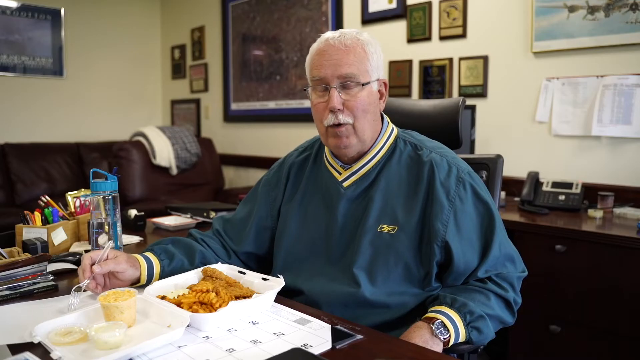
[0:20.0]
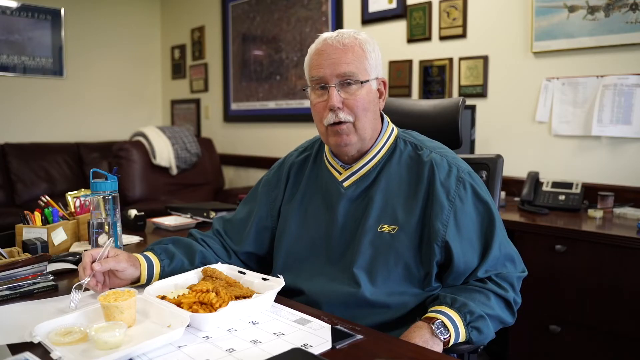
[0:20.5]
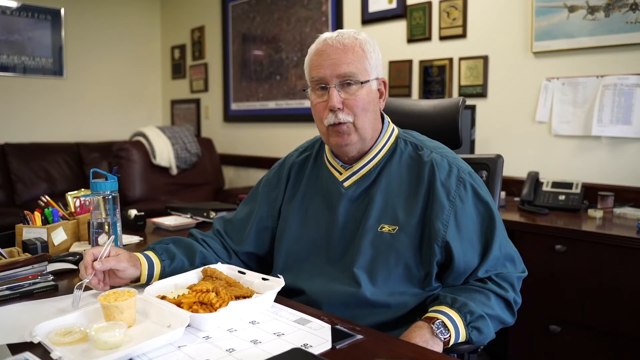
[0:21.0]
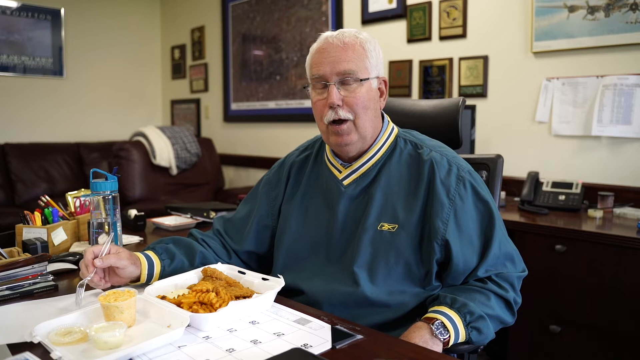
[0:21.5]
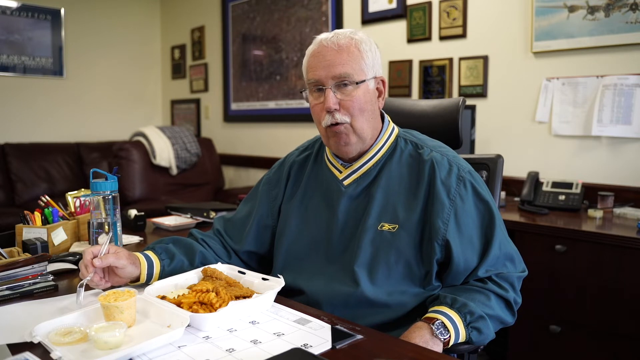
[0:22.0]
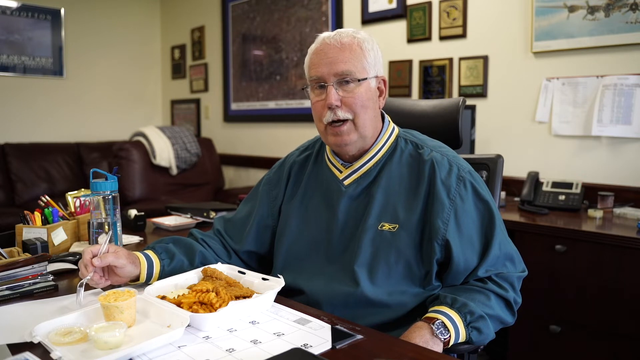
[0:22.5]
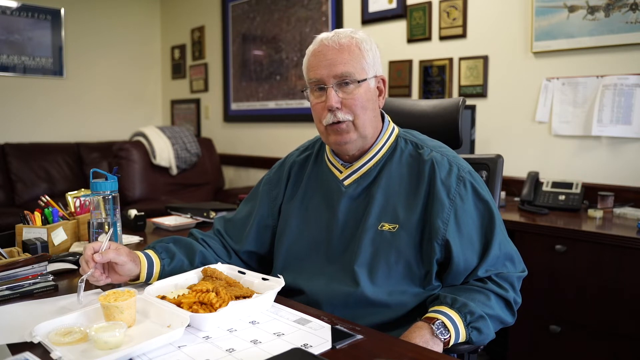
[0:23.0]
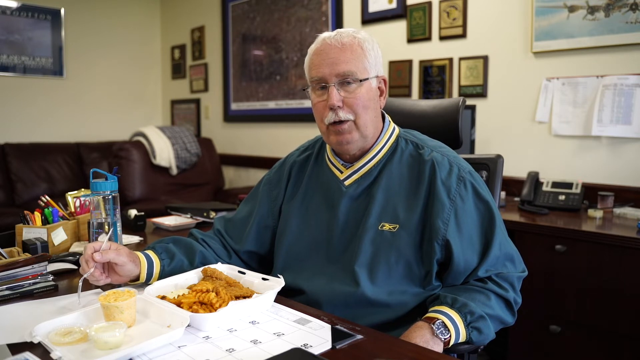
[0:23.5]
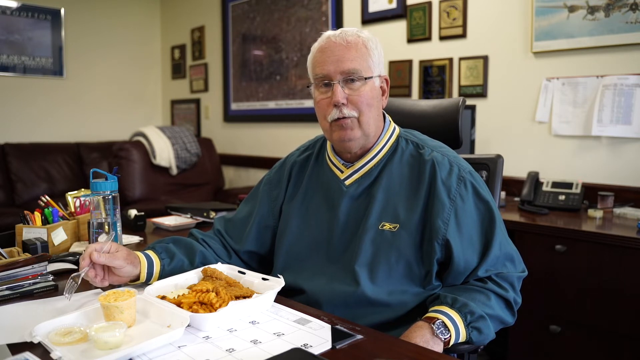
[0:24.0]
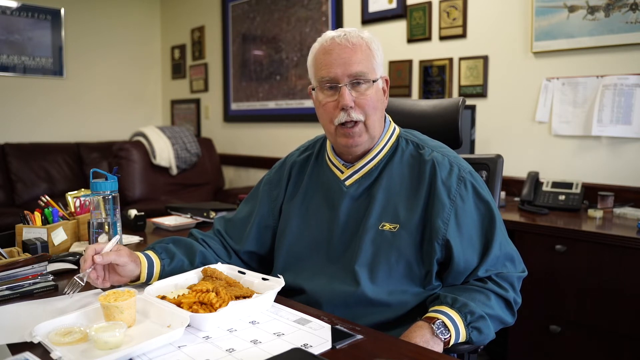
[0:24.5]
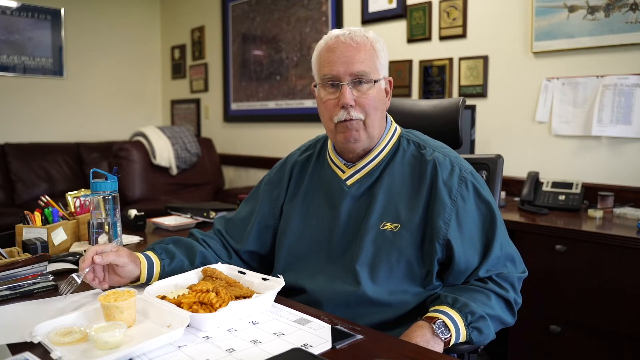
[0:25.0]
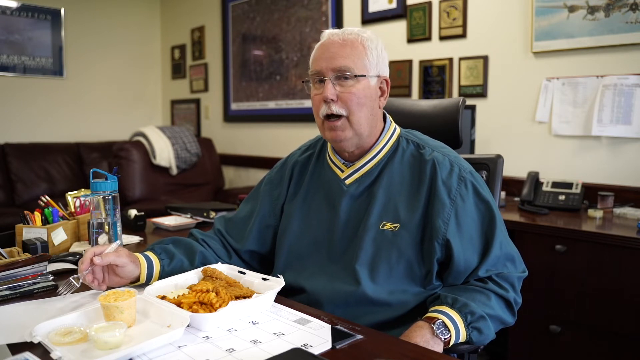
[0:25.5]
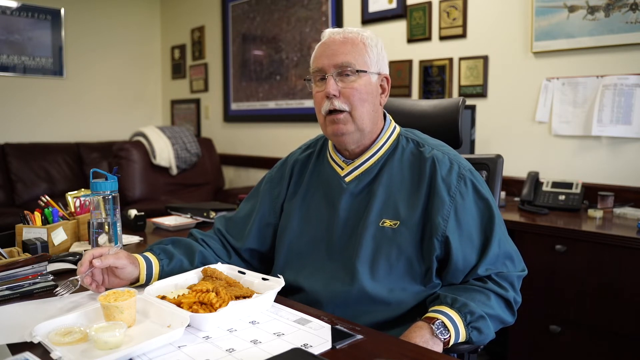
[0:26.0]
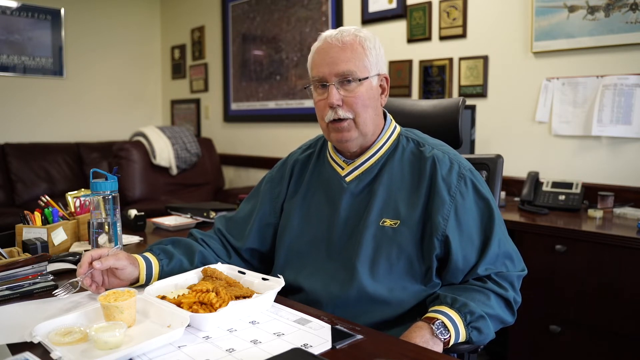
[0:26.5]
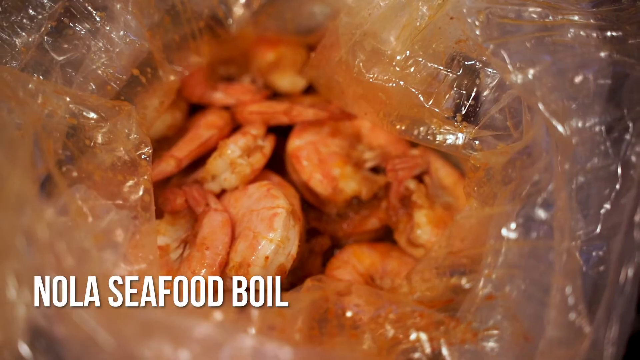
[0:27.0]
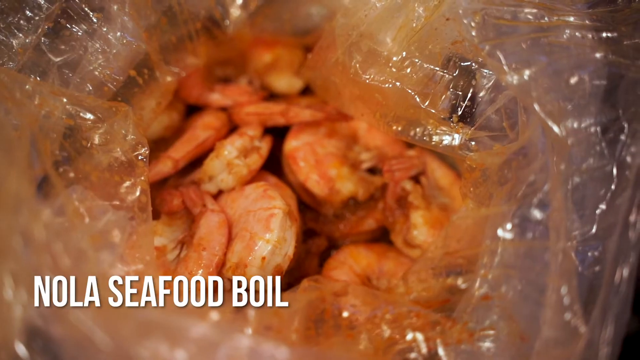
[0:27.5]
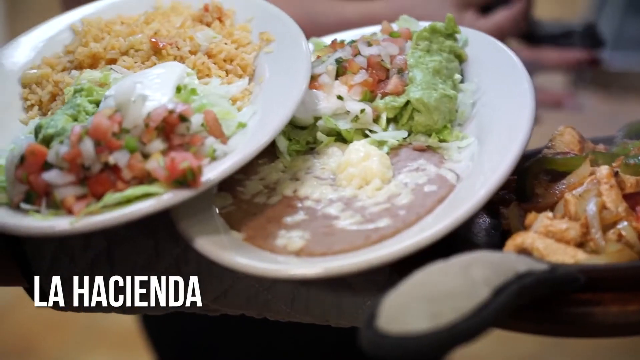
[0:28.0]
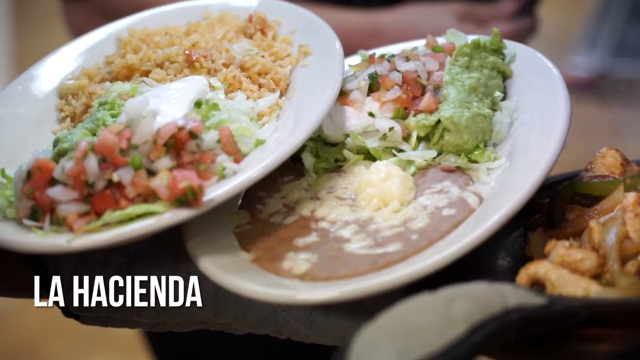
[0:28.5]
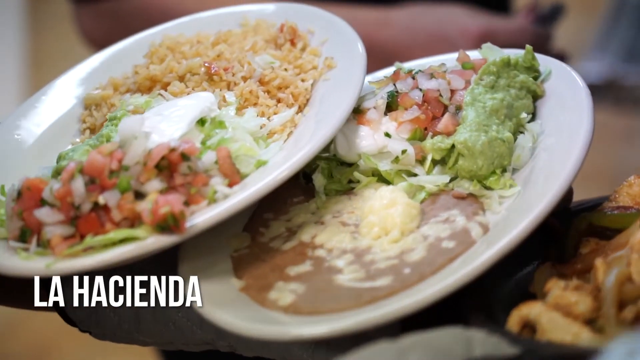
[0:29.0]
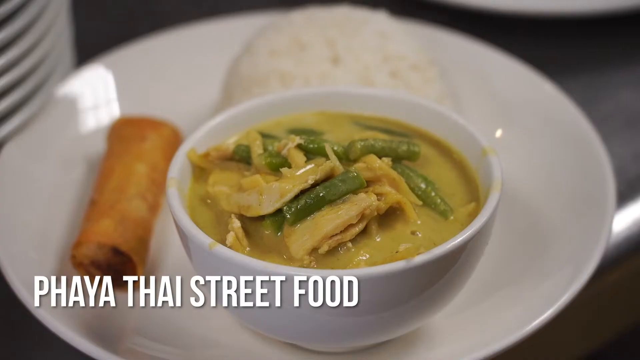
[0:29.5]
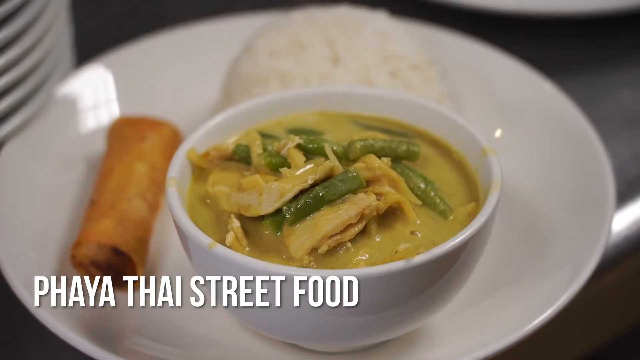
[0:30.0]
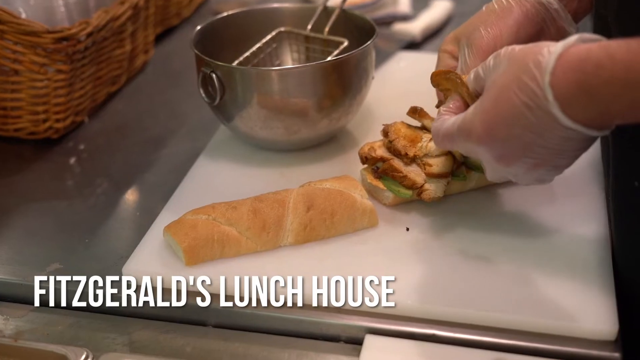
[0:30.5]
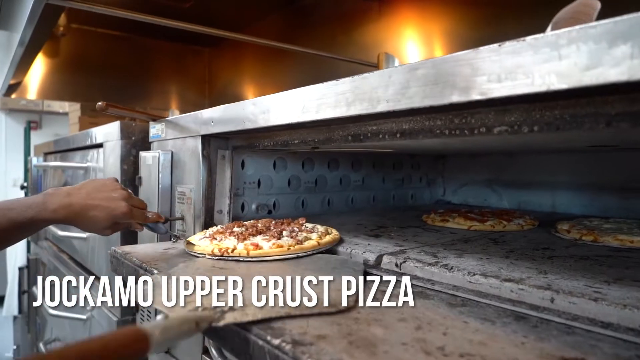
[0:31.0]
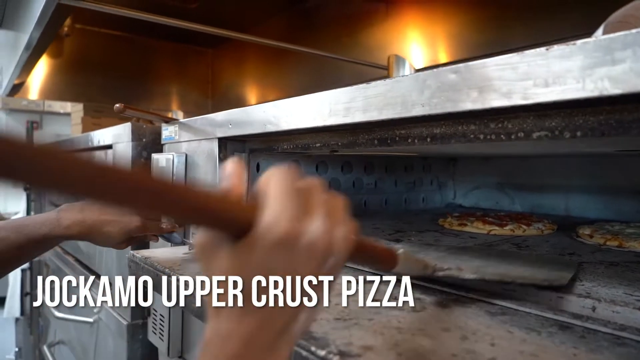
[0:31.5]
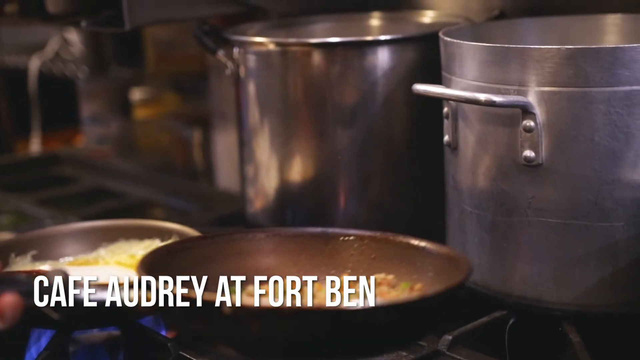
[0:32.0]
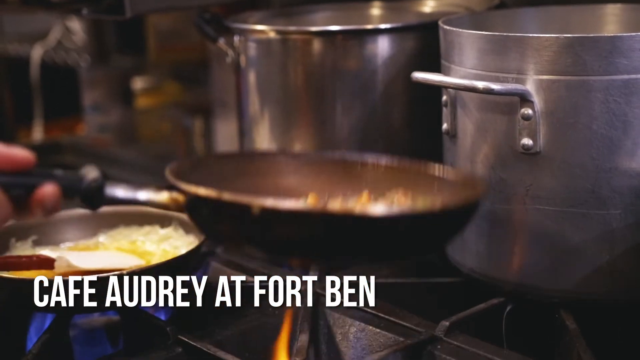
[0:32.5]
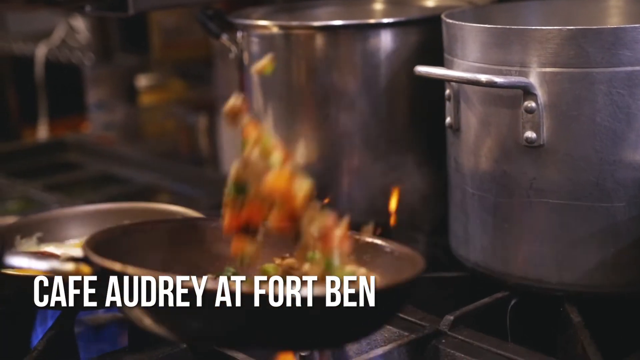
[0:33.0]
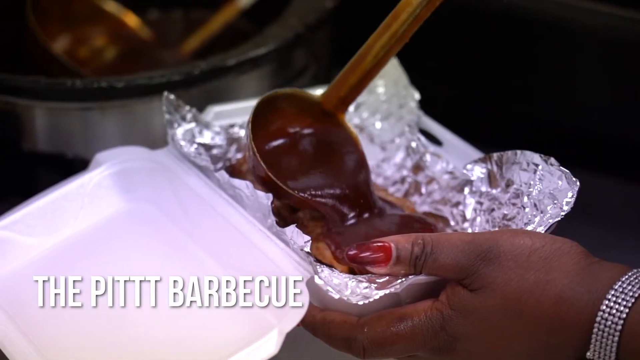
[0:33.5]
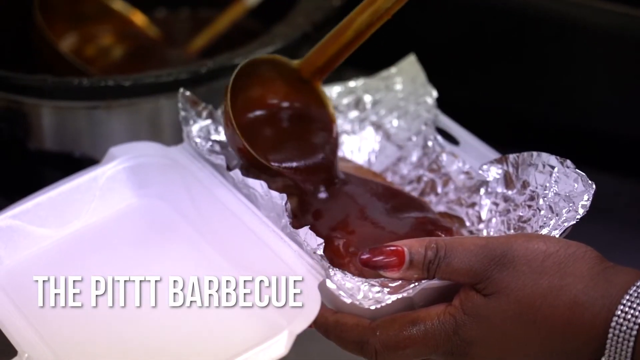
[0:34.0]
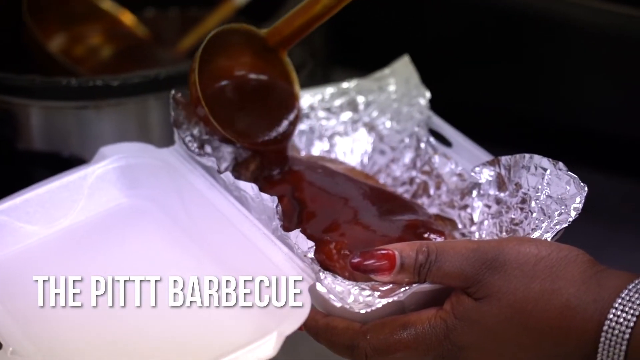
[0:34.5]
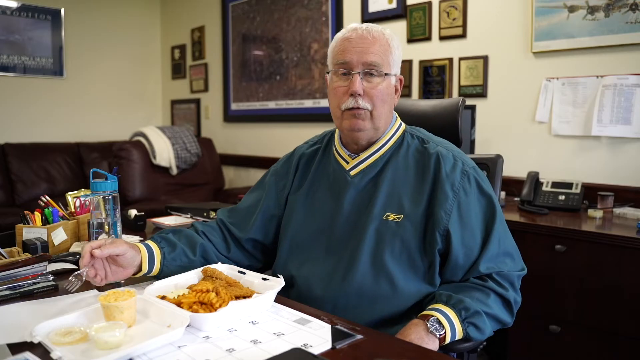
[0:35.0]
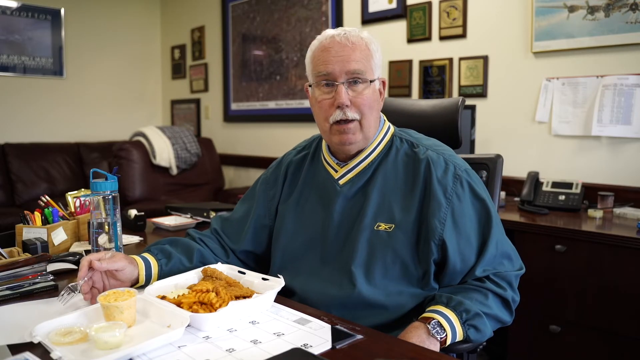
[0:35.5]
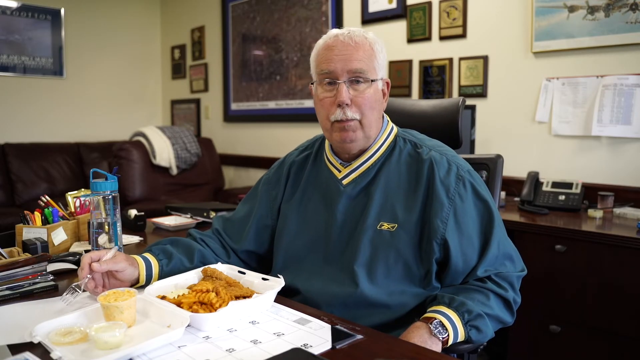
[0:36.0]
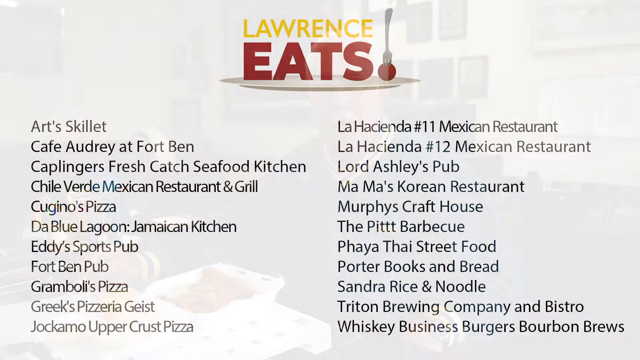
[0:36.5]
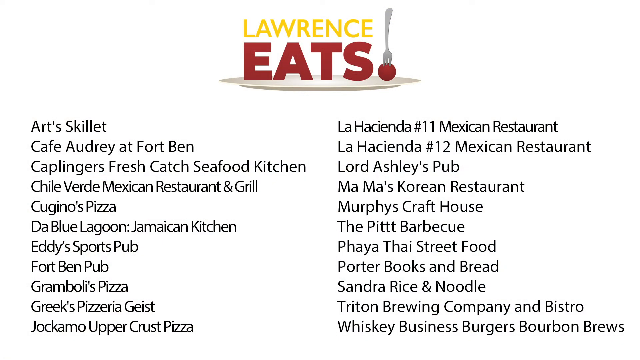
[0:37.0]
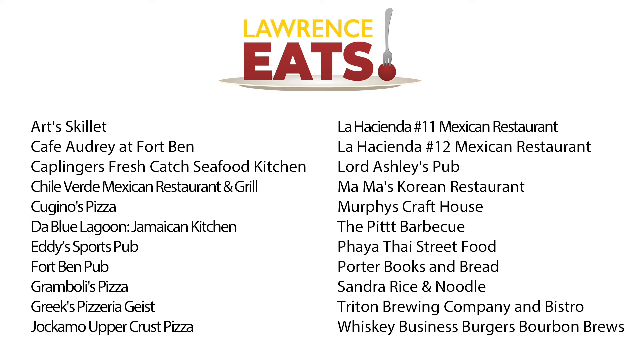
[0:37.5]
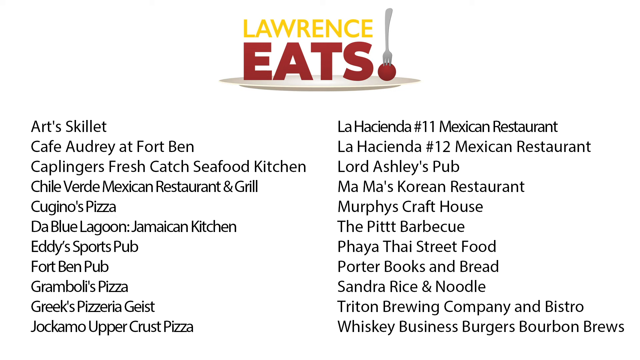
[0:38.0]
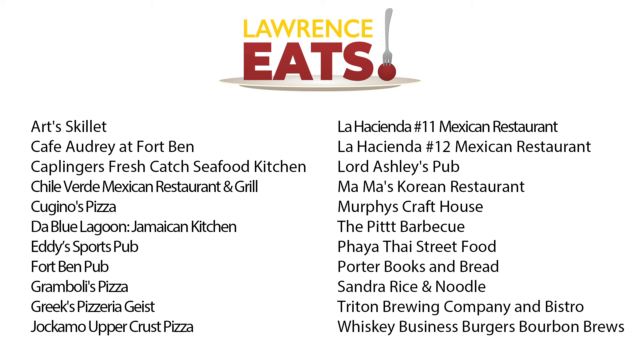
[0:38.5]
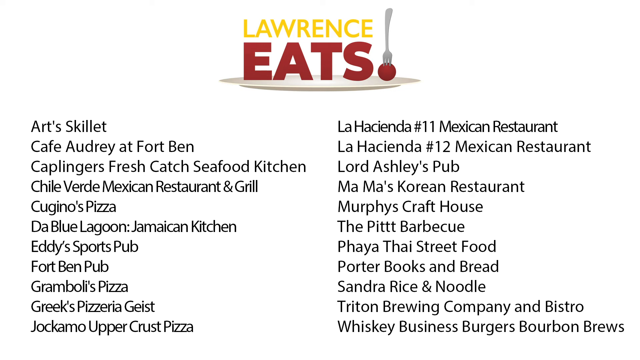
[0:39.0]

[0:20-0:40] An older man with a white mustache, white hair and glasses wears a darker blue Reebok sweater windbreaker with a yellow Reebok logo. Around the cuffs of the sleeves and the neck there is a yellow stripe with a blue stripe in the middle. He appears to be in an office setting, with a plaque behind him, a desk phone on his desk, a desk behind him, and a leather couch to the side. In front of him is a takeout container of food. He is talking while sitting there with a plastic fork. A close-up shows the food. Scenes of different food from different restaurants follow: a seafood broil and a bag of shrimp; La Hacienda, with Hispanic food, apparently pico de gallo and rice; Thai Street Food, with something like an egg roll and Thai soup; Fitzgerald Lunch House, with something like a sandwich being made; Giacomo Upper Crust Pizza, with a pizza coming out of the oven; Cafe Audrey at Fort Bend, with beans on the stove; and The Pit Barbecue, with something being poured. The scene then returns to the man.